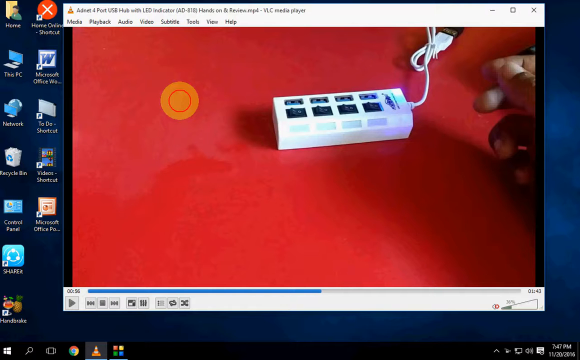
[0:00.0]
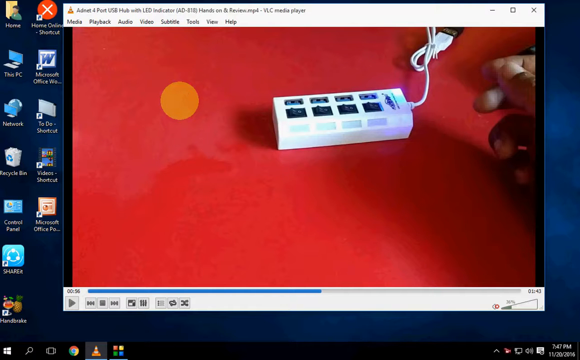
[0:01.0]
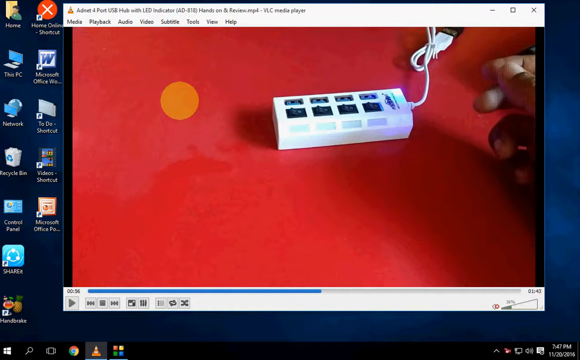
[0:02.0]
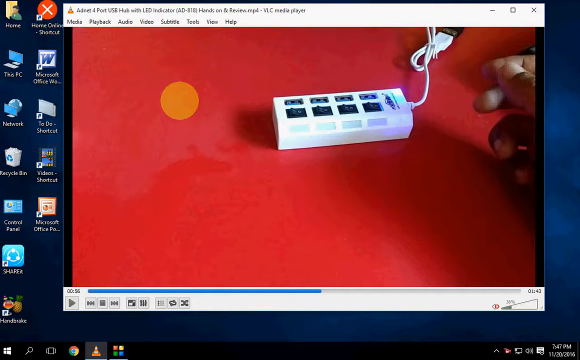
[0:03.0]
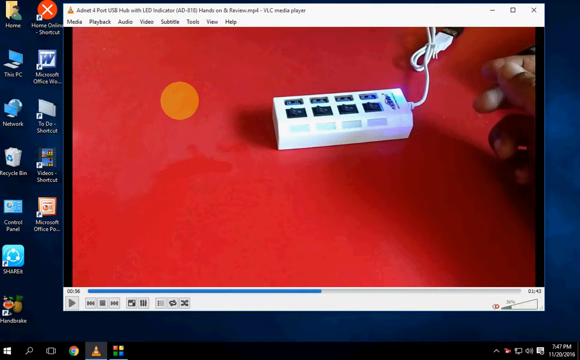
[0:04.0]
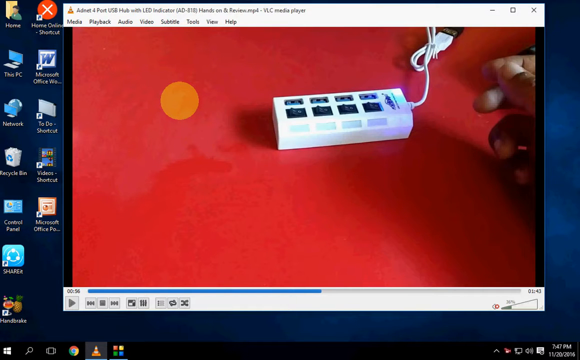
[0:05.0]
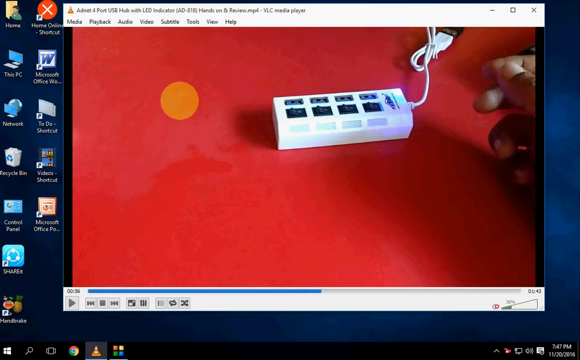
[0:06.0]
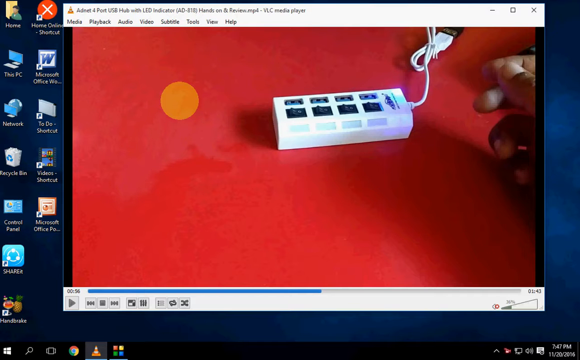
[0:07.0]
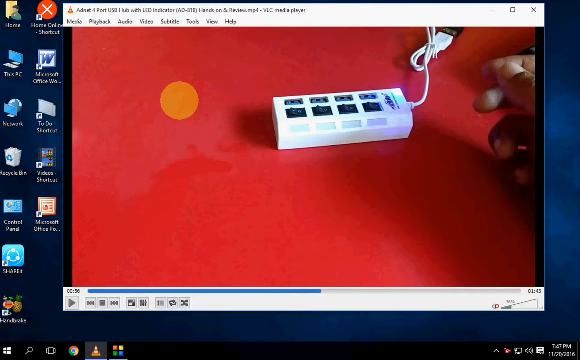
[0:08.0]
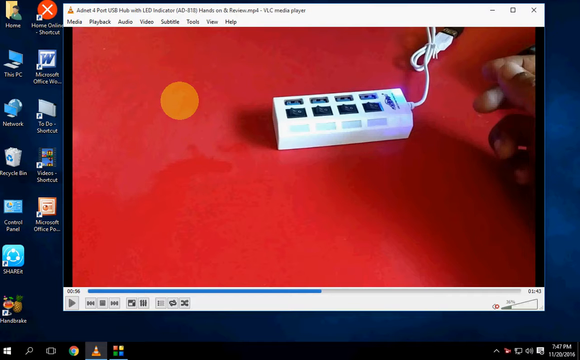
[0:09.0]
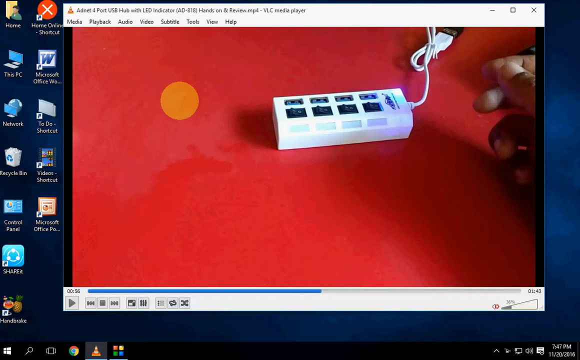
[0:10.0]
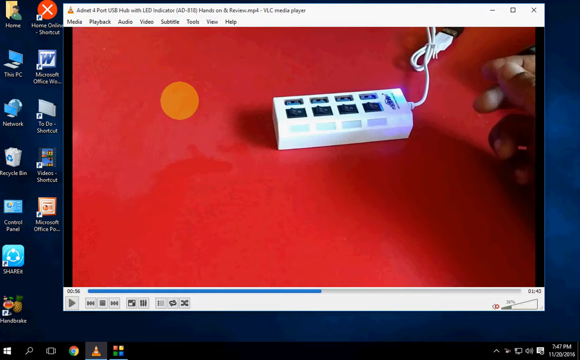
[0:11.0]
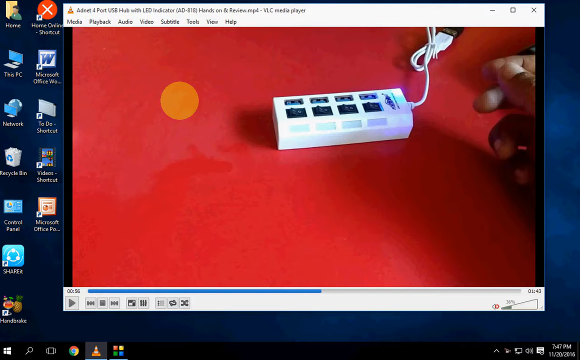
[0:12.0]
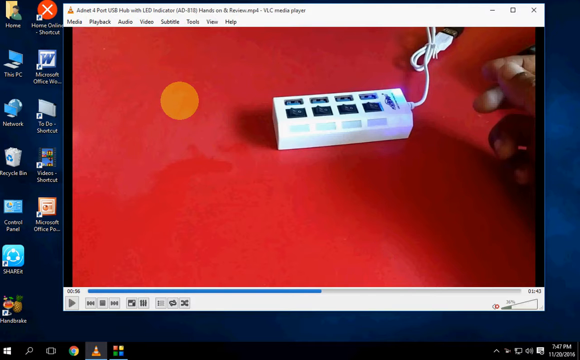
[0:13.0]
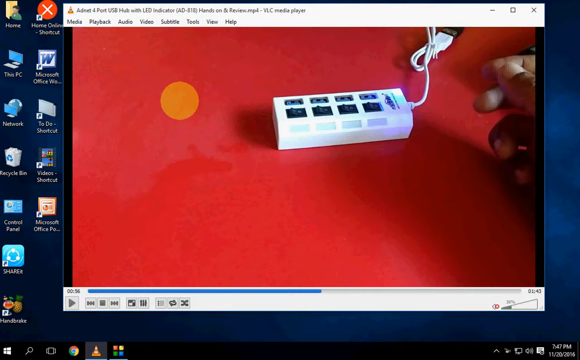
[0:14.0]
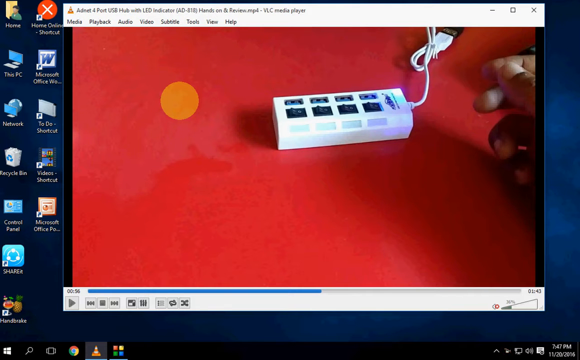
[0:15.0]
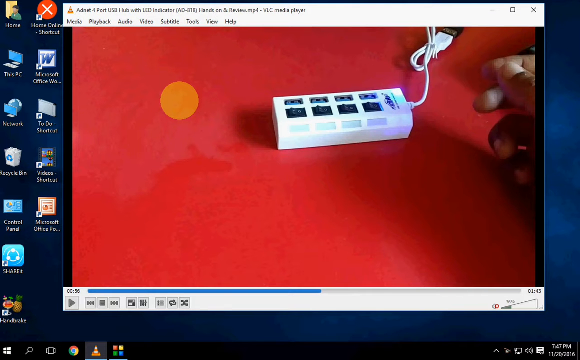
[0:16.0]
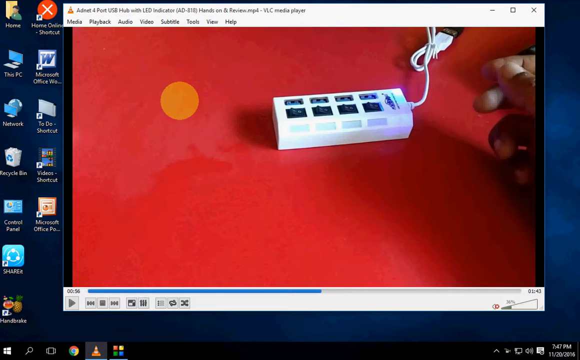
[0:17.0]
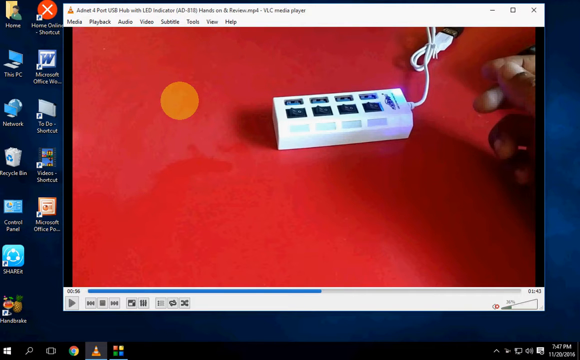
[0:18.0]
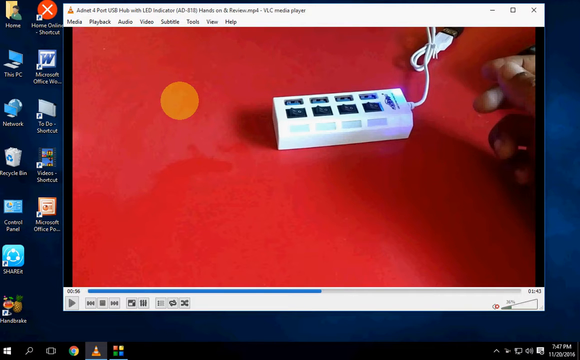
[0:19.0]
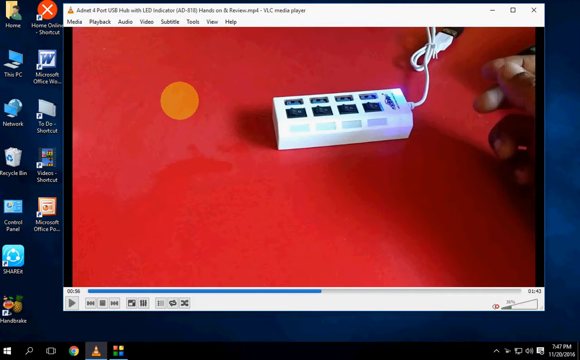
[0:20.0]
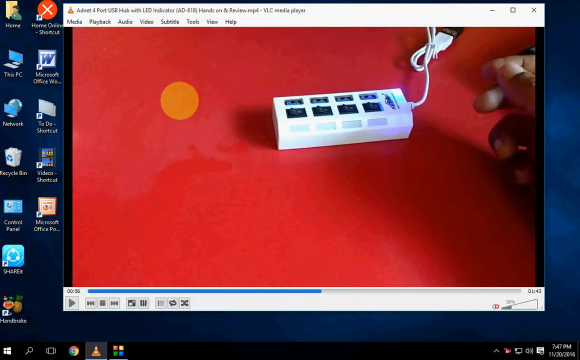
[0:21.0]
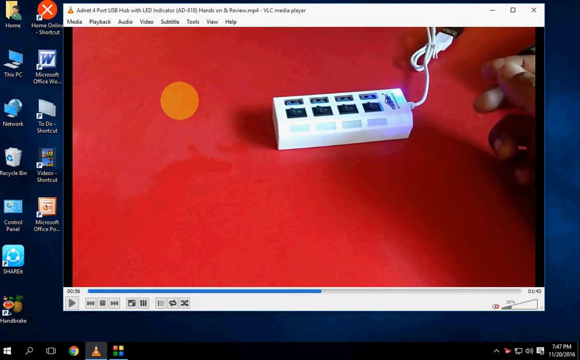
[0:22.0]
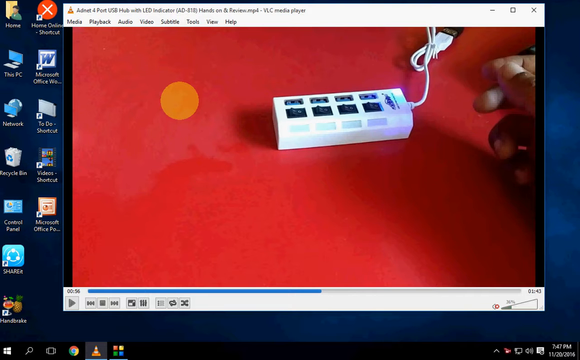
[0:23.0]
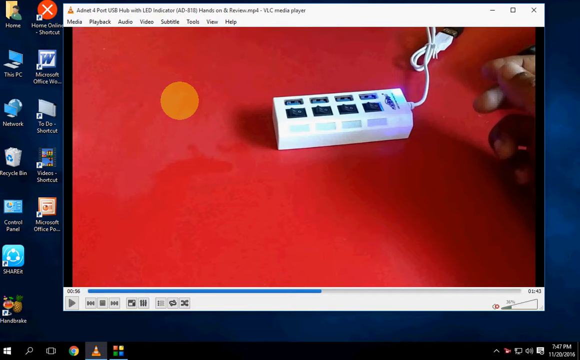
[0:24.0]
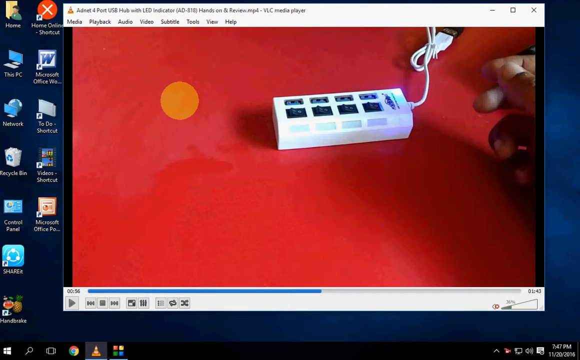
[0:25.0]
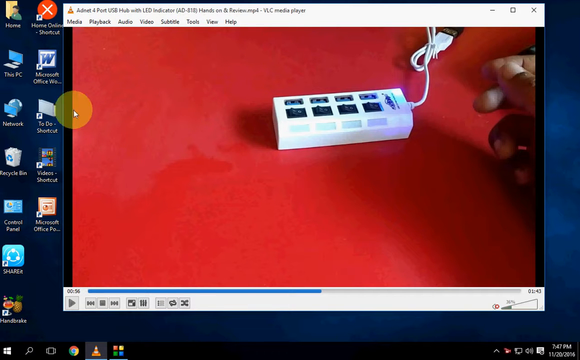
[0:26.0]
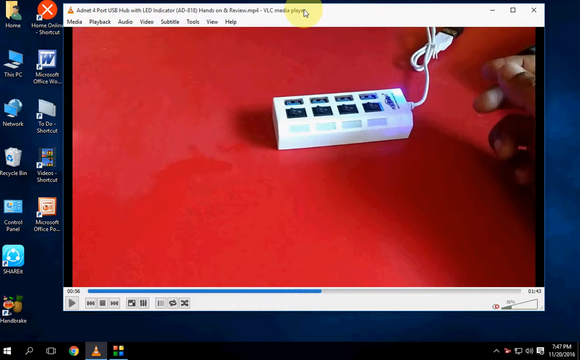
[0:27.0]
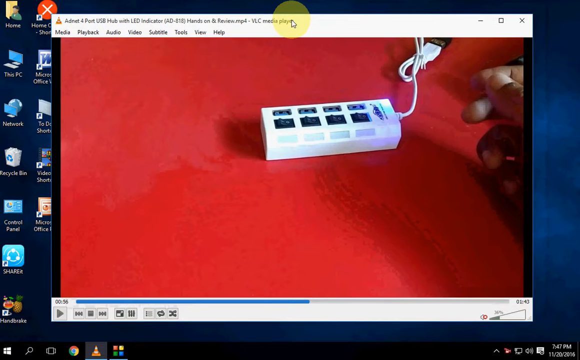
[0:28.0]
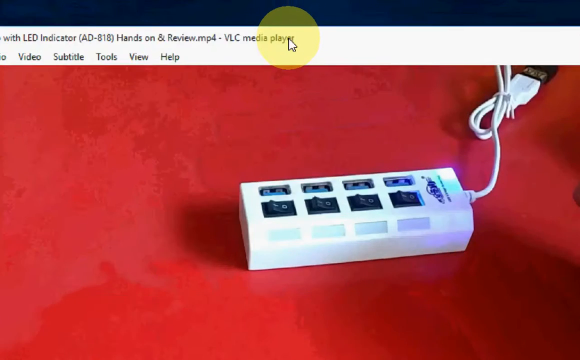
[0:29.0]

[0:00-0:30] A Windows desktop appears with many icons on it, but most of the screen is taken up by a VLC video player, in which a video is paused halfway through. The paused video shows a little white thing with eight ports on top of a red surface, with a hand on the right side of it. An orange circle is at the top left. Everything moves for the first couple of seconds, and after that nothing happens for most of the time. The mouse moves a bit, and a yellow circle follows it. The mouse moves to the top right, or top middle, of the VLC window, and the screen then zooms in onto the mouse and follows it as it moves around. Desktop icons include Recycle Bin, Control Panel, Microsoft Office, a to-do list, Microsoft Word and Home, and a Google Chrome logo is on the taskbar at the bottom.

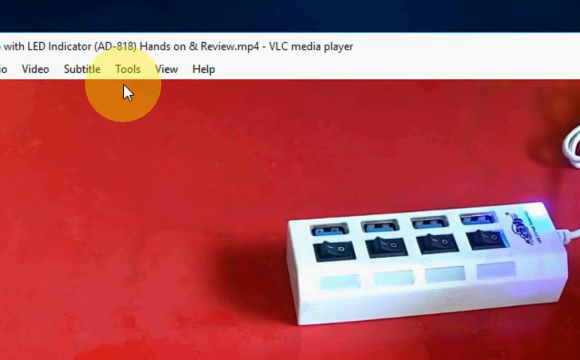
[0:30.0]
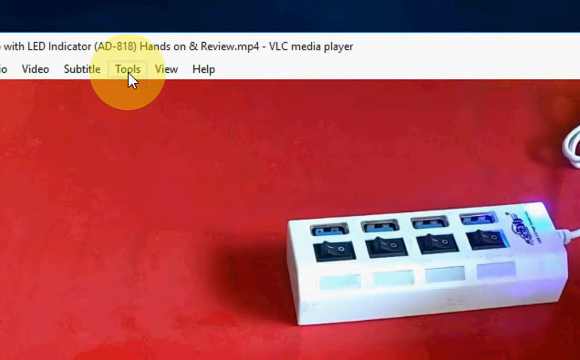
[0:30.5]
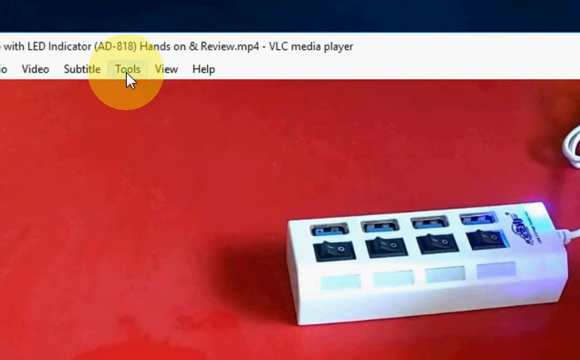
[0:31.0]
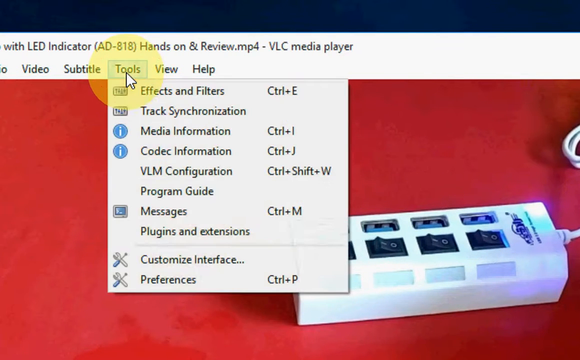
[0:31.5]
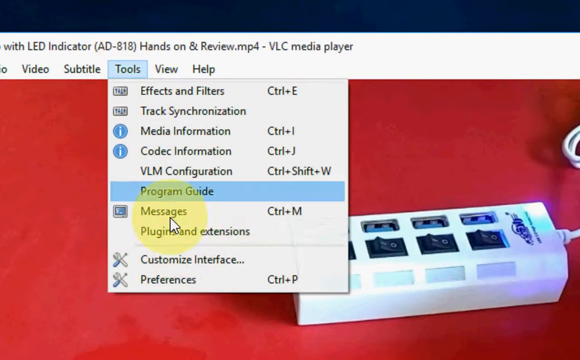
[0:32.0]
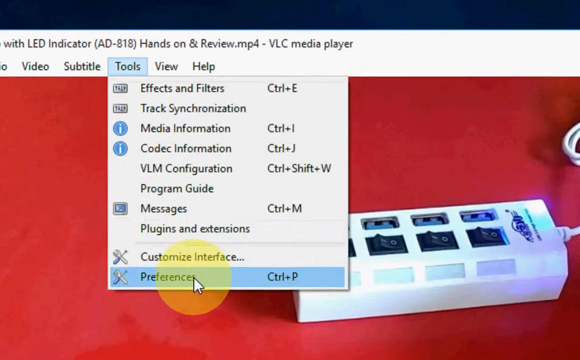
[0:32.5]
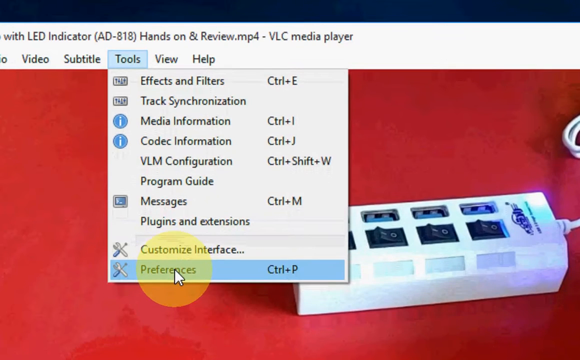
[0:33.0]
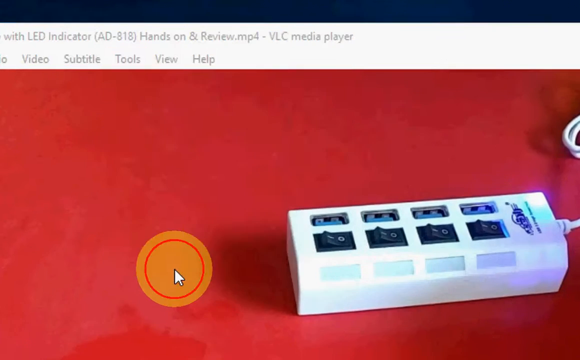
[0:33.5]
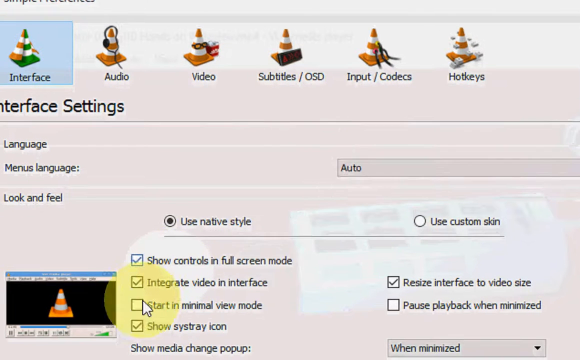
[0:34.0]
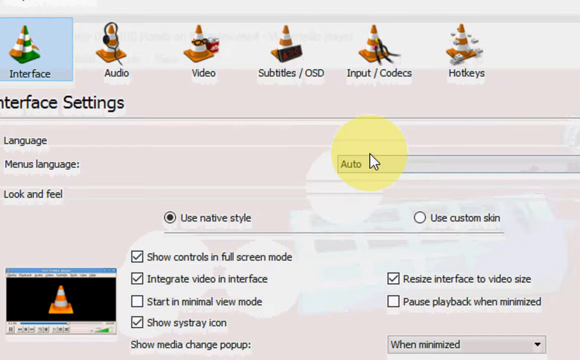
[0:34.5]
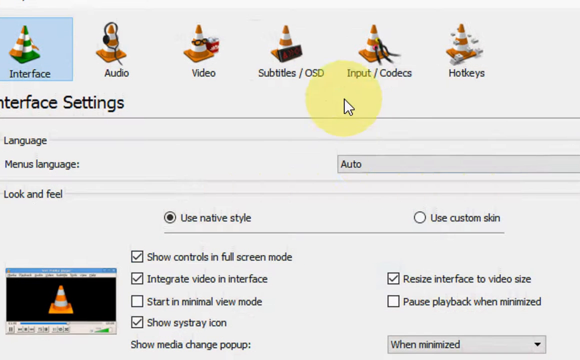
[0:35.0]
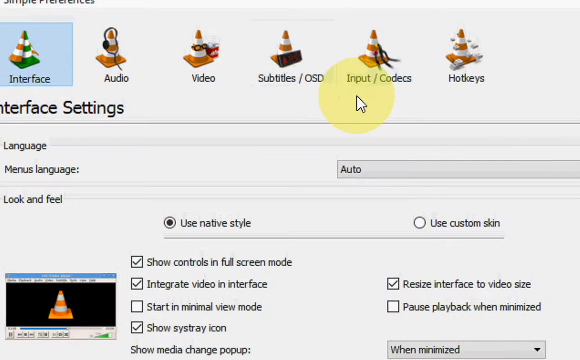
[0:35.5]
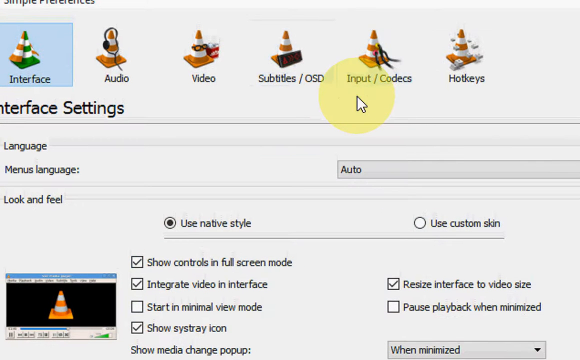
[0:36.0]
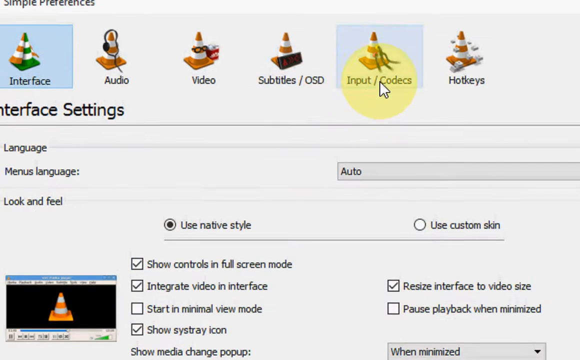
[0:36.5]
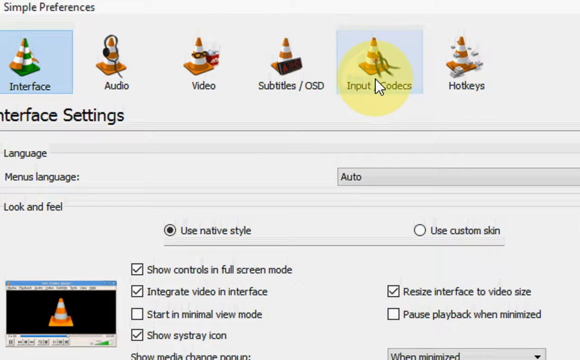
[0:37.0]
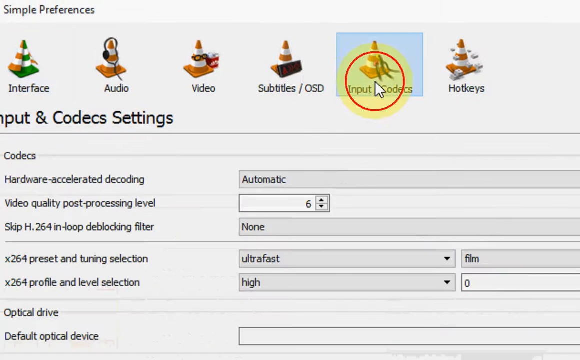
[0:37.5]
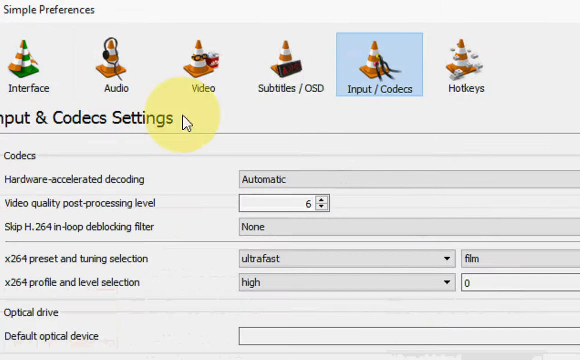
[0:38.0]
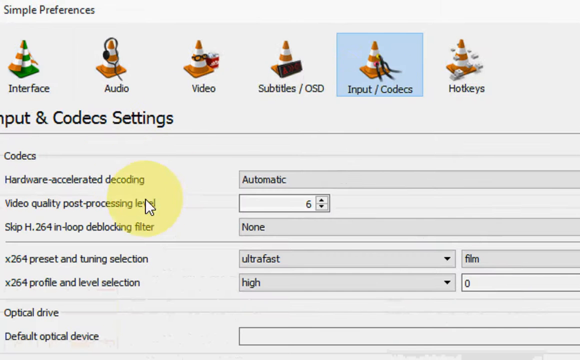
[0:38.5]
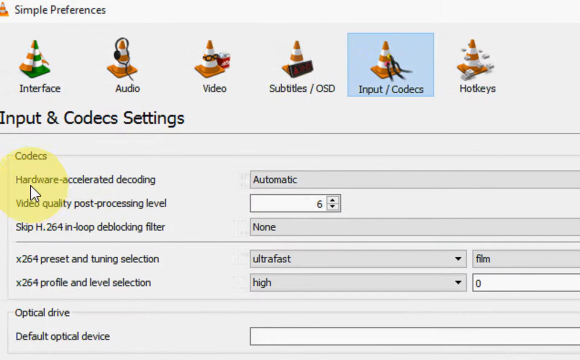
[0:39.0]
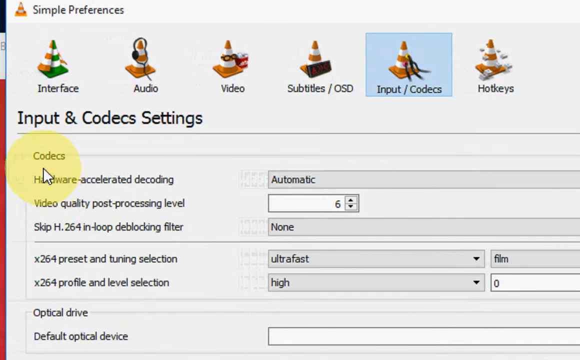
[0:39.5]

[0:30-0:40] The mouse hovers over the Tools option at the top of the VLC window, and when it is pressed a dropdown appears with 10 options in order: Effects and Filters, Track Synchronization, Media Information, Codec Information, VLM Configuration, Program Guide, Messages, Plugins and Extensions, Customize Interface, and Preferences. The mouse moves to the very bottom and highlights Preferences; when it clicks, a red circle appears around the cursor. The cursor moves around, and a new Simple Preferences window appears. The mouse moves to the Input / Codecs option and then moves around the options shown there.